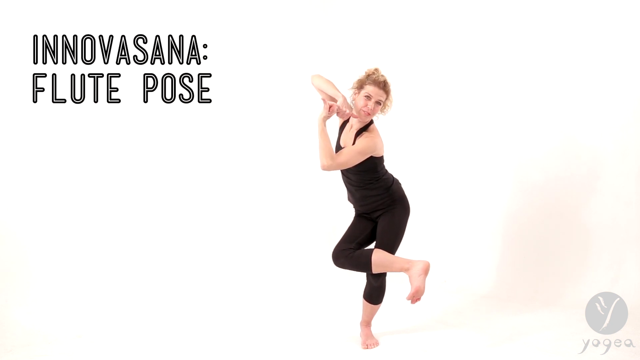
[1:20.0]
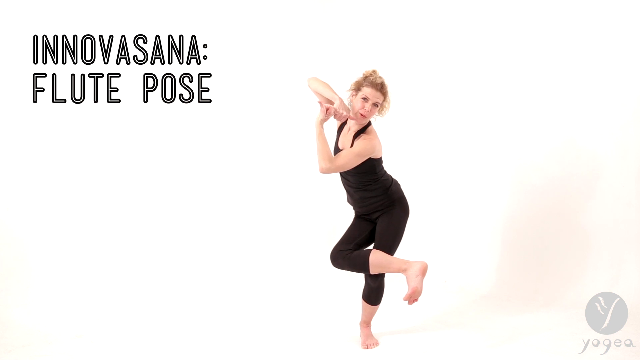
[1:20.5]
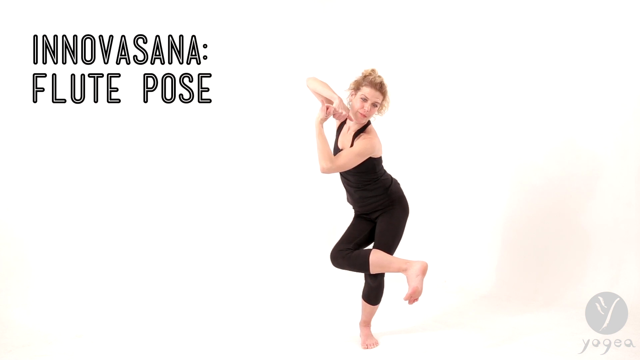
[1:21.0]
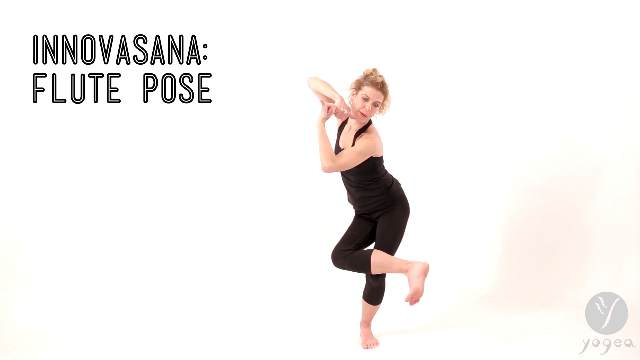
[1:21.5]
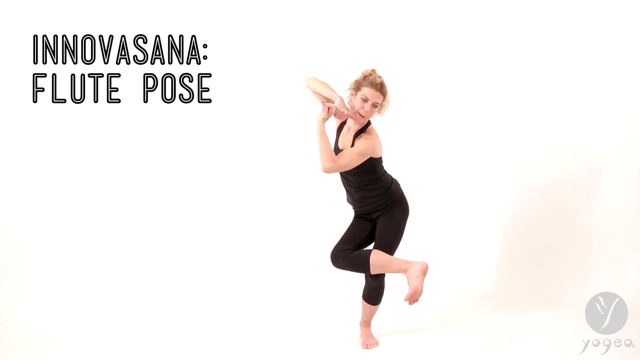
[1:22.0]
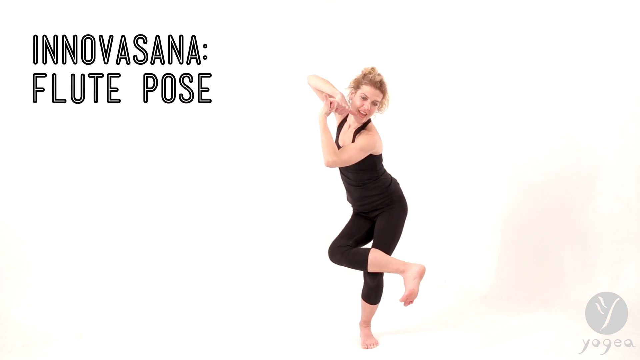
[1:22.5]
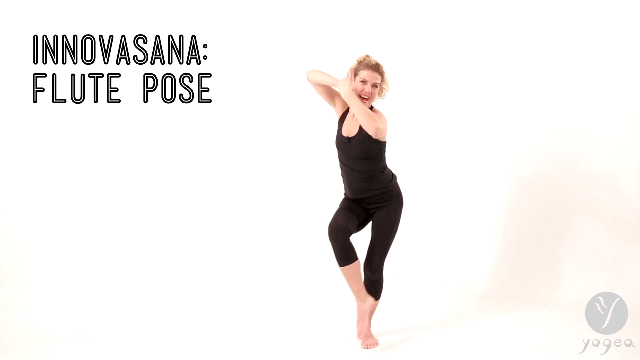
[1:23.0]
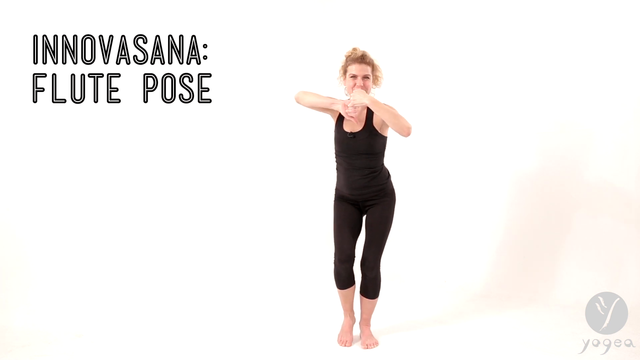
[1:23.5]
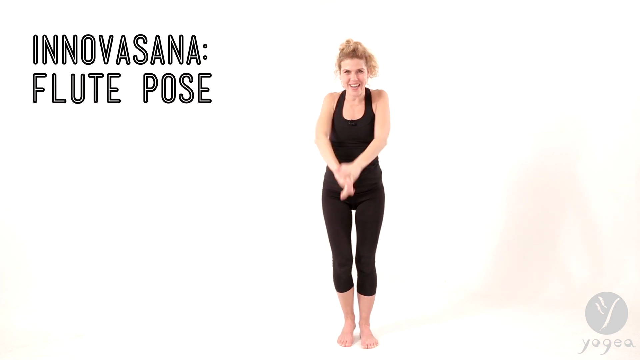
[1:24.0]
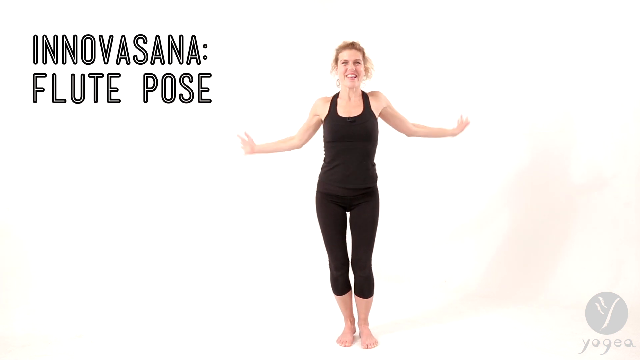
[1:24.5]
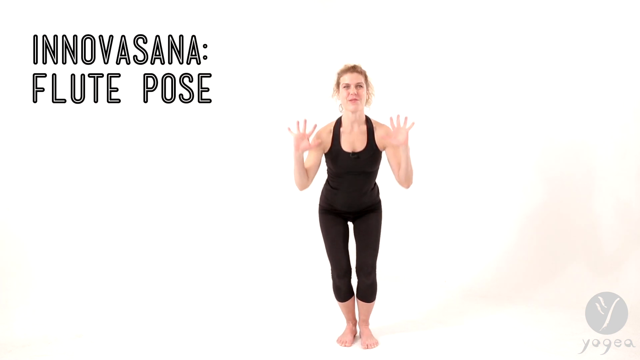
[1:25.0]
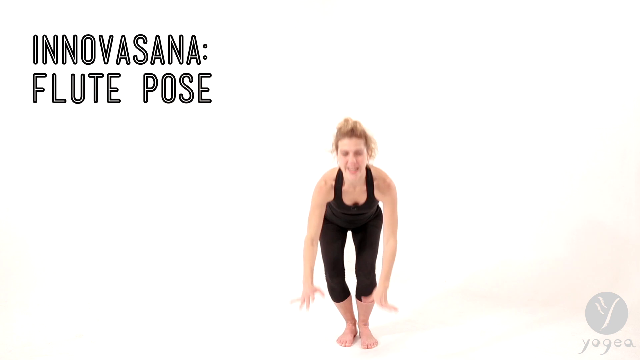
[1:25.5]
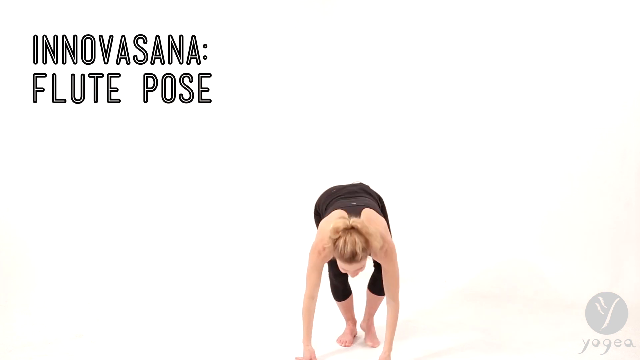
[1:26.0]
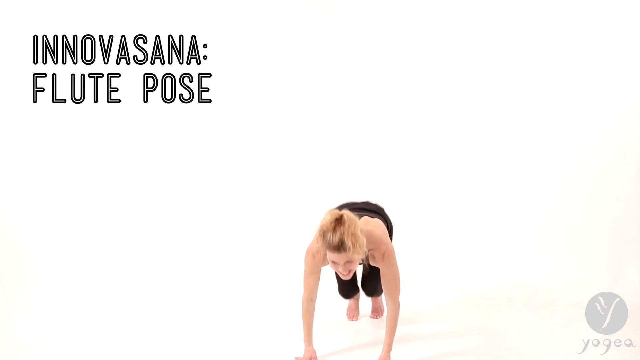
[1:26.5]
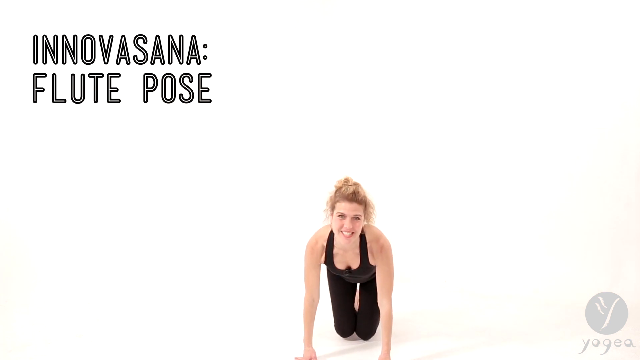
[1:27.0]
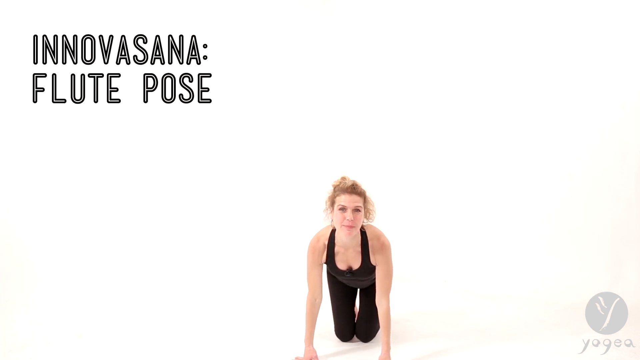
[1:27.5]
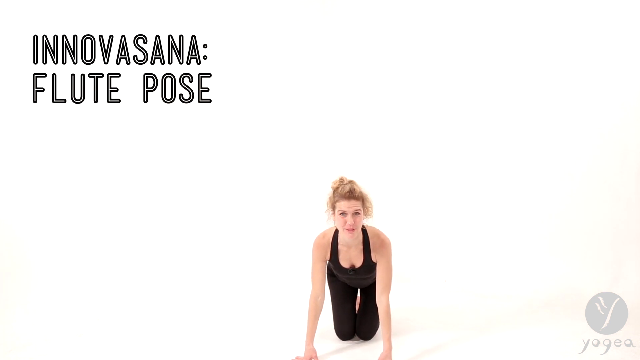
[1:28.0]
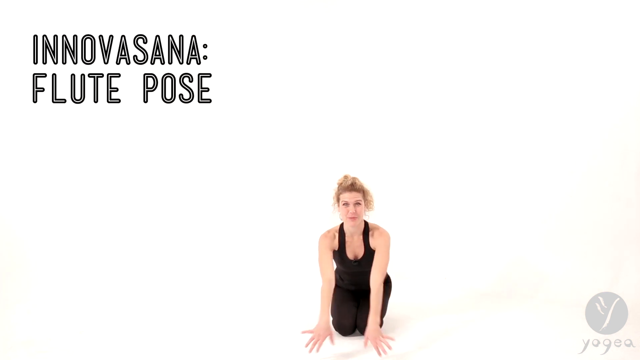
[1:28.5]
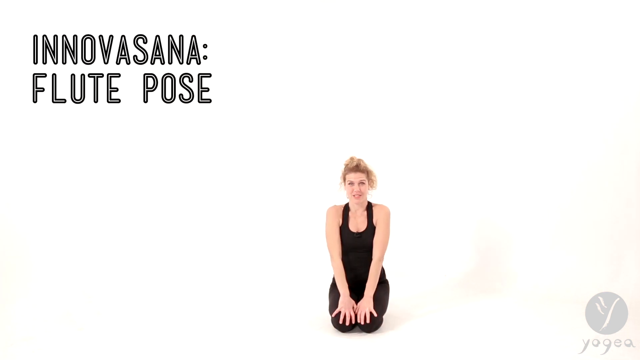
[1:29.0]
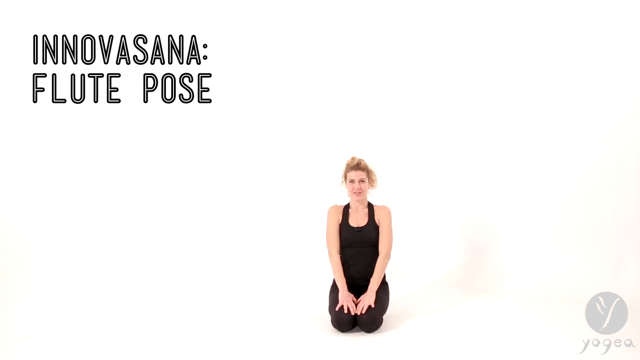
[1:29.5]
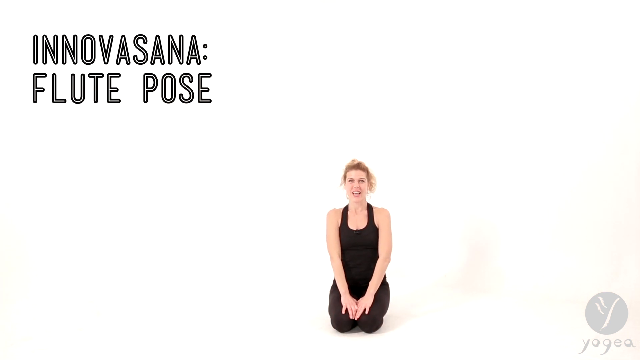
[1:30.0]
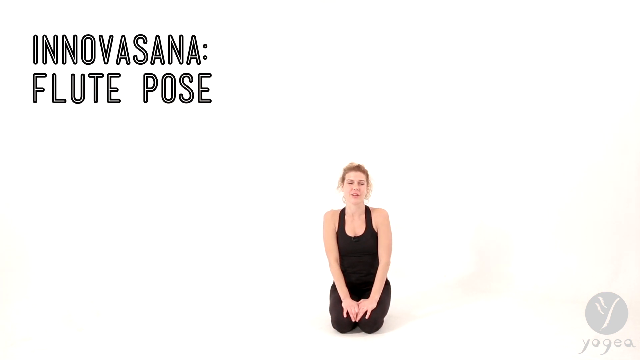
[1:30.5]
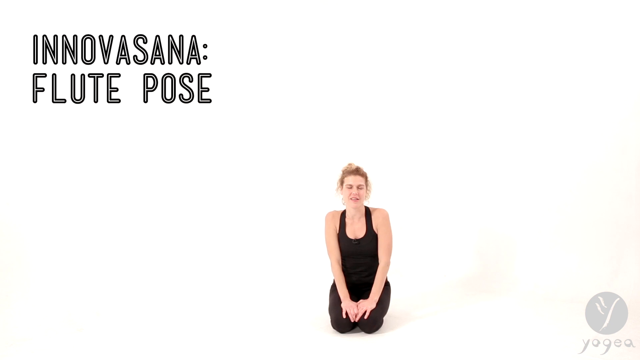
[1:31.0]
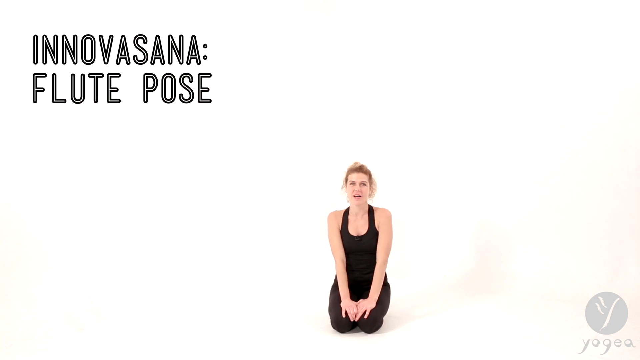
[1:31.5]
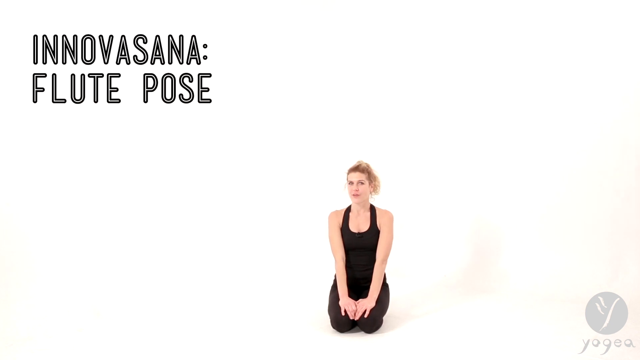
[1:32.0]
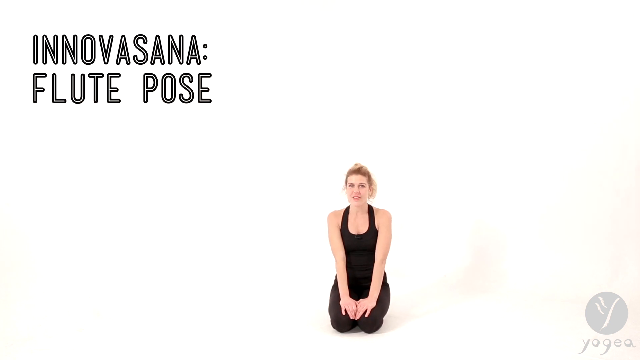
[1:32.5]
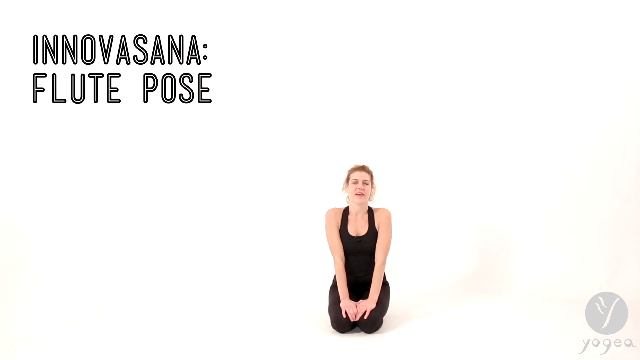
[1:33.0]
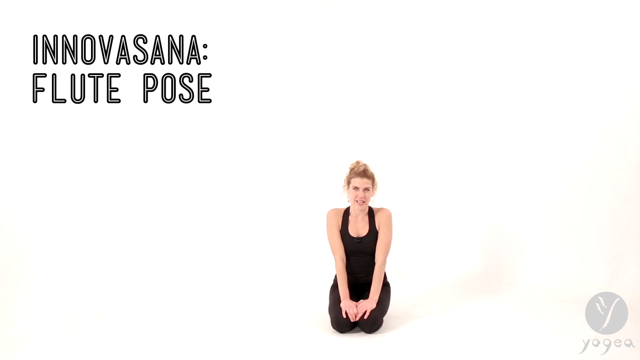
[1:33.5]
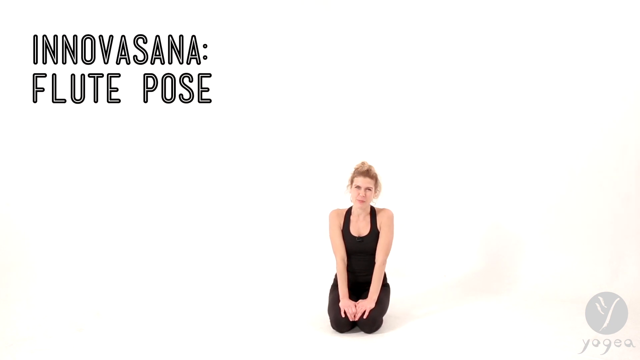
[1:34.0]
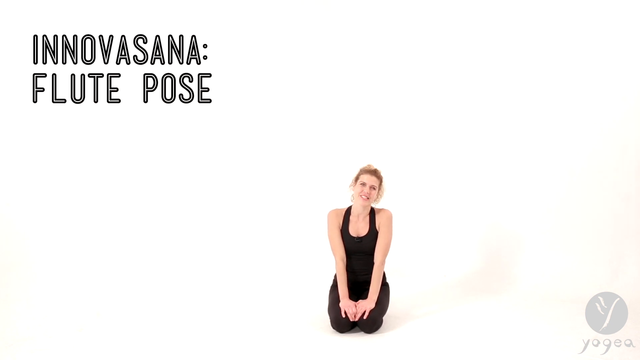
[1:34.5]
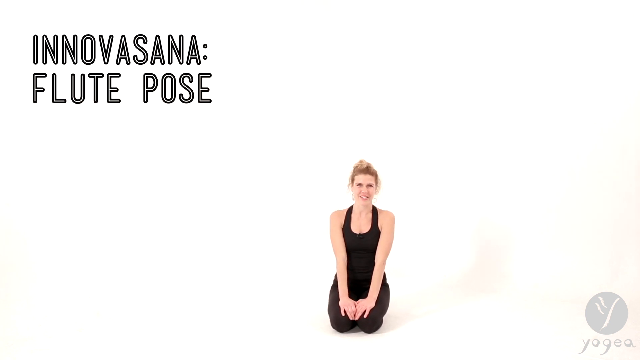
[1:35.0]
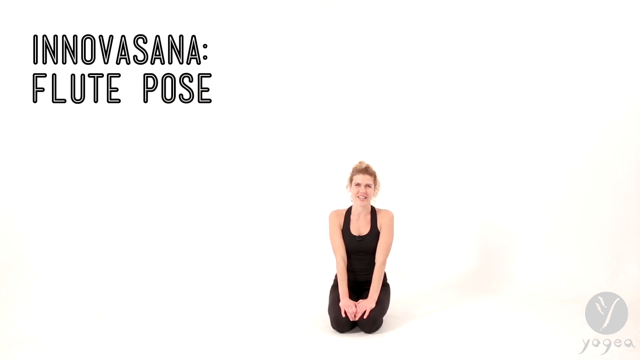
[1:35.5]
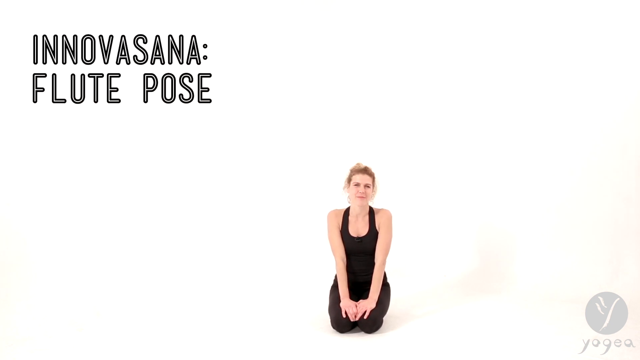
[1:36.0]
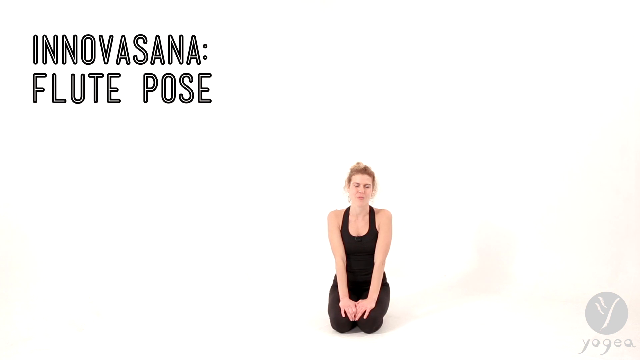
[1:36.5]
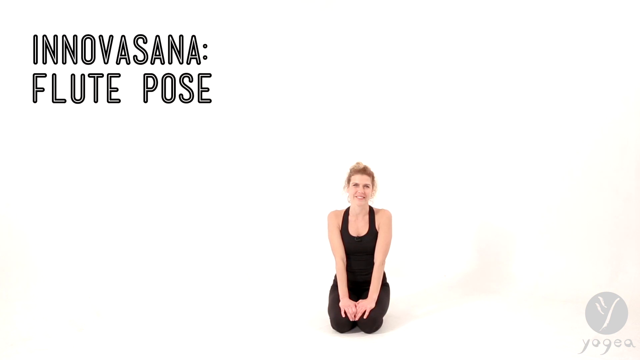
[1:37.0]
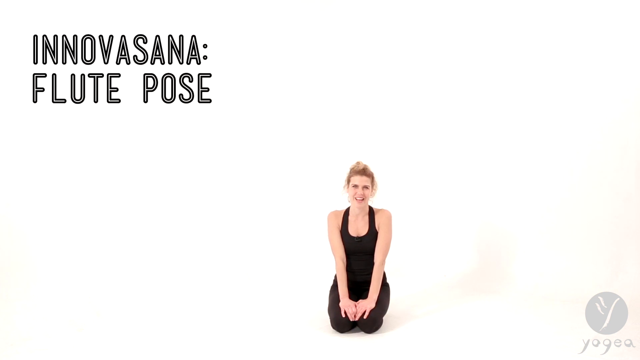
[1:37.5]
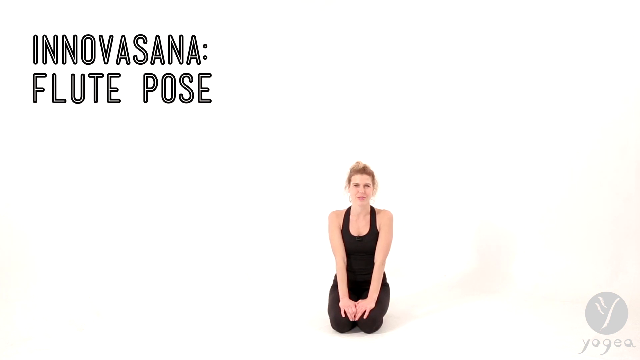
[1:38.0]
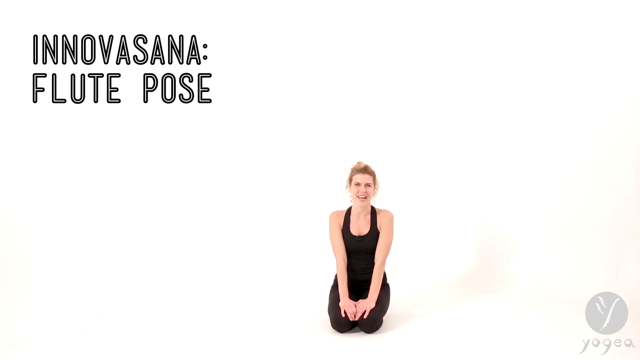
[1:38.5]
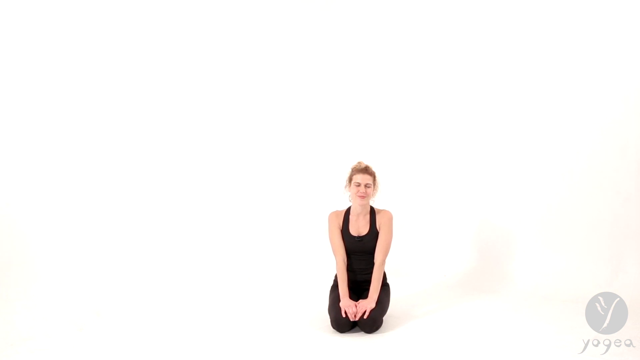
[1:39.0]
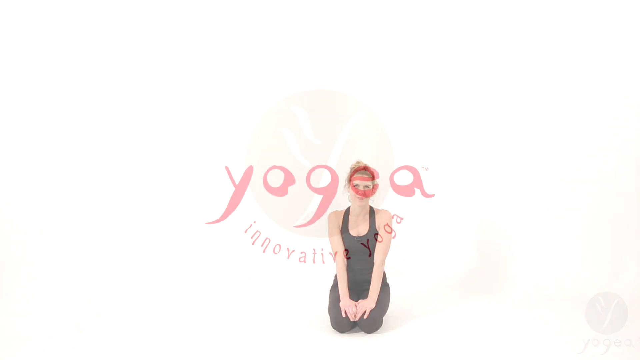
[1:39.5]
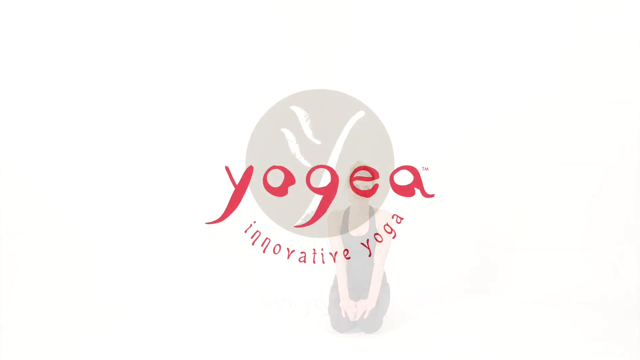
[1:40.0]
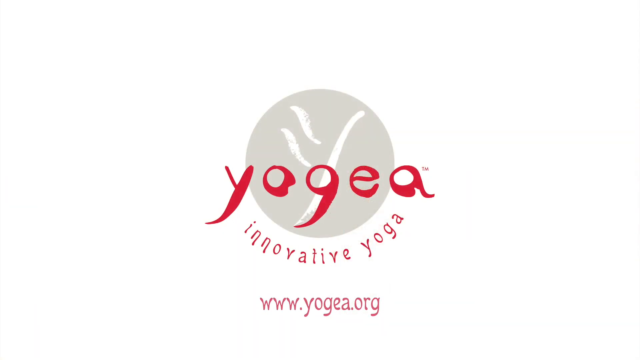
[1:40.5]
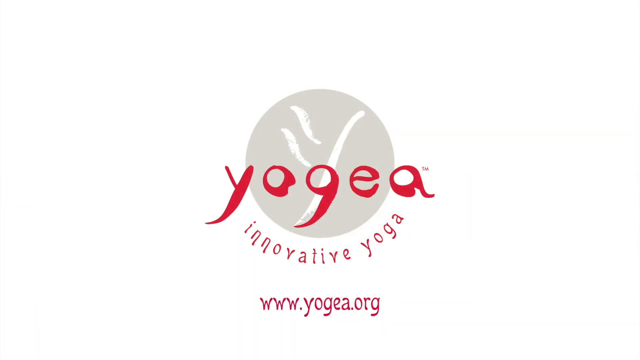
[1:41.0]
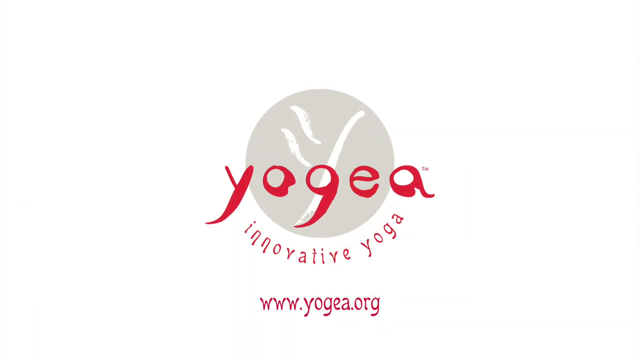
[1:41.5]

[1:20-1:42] The woman stands in the completely white studio in her black leotard, balancing on one leg with her foot on the floor and her other leg lifted and crossed over the standing leg. Her hands and arms are out to her sides, her fingers kind of clasped together, with one arm up in the air and the other pointing toward the floor. She comes out of the pose, stands up with both feet on the floor, waves both hands out to her sides, and lifts them into the air, showing her palms to the camera. She puts both palms on the floor, balances herself, and lowers her whole body to the floor until she is sitting on her knees. She rests her hands on her legs in front of her as she talks to the camera. The video ends with the logo for her company, Yogea, with the tagline "Innovative yoga" and a link to her website underneath.